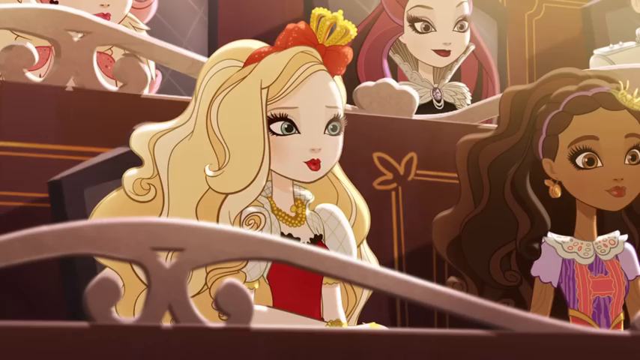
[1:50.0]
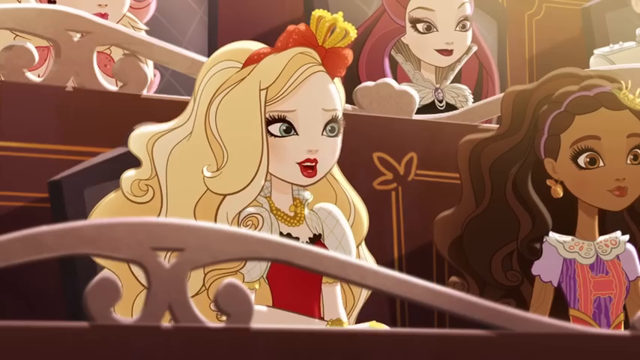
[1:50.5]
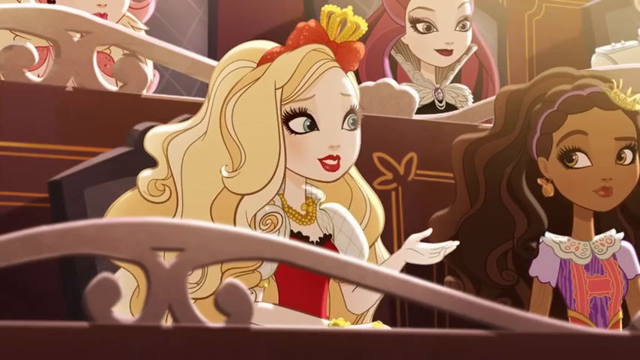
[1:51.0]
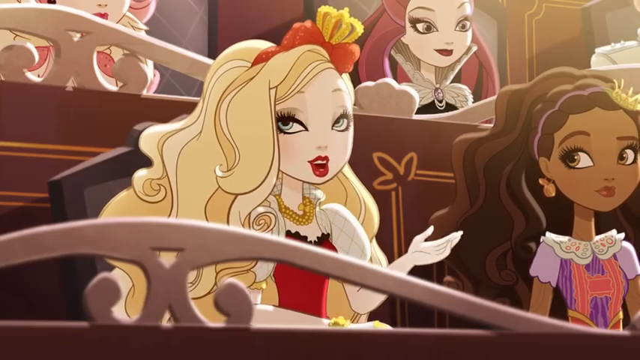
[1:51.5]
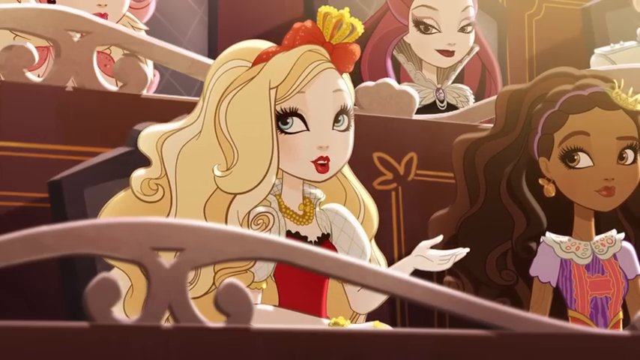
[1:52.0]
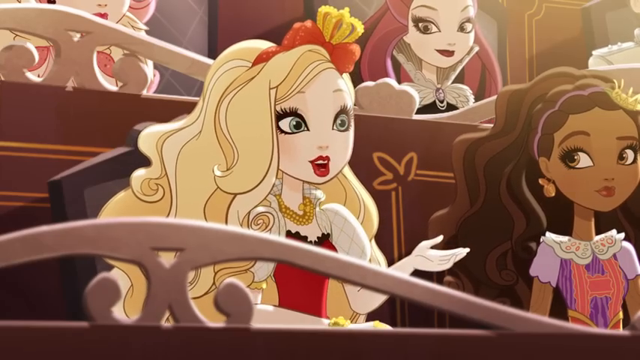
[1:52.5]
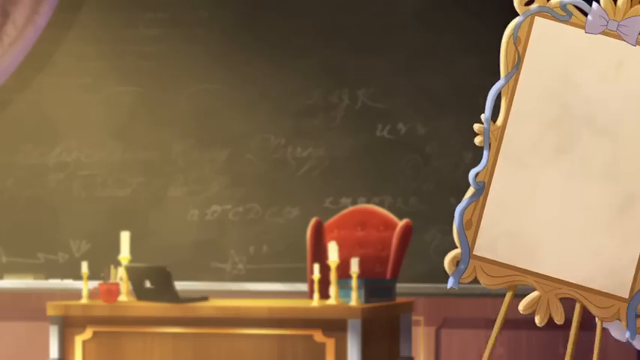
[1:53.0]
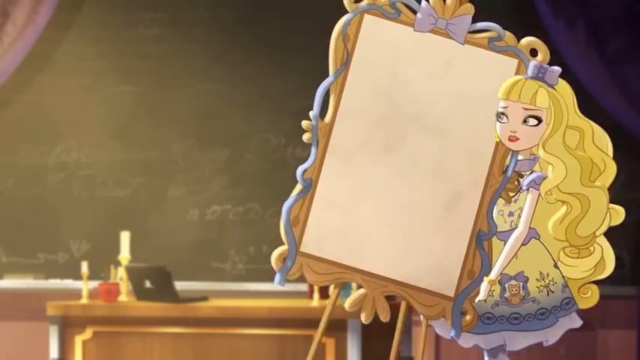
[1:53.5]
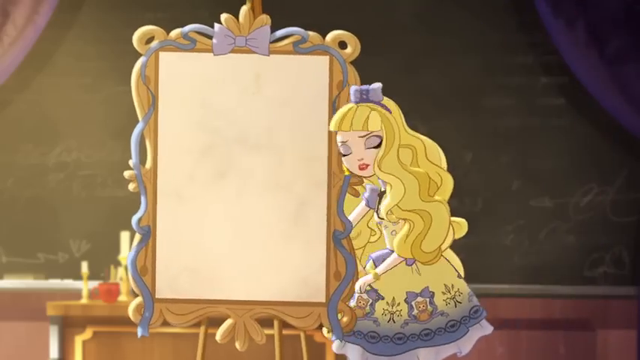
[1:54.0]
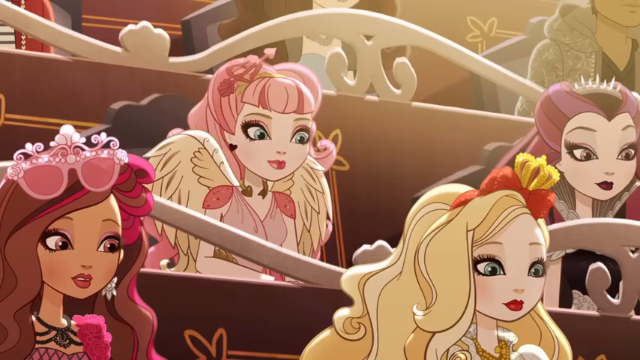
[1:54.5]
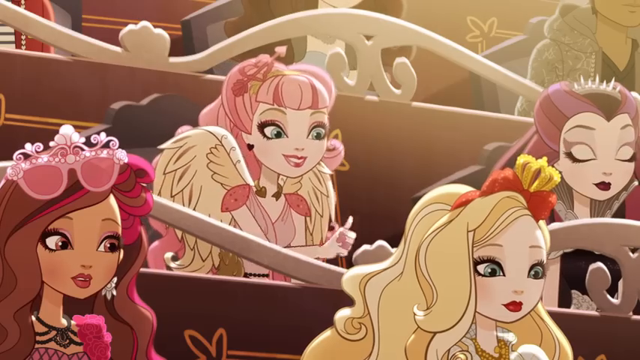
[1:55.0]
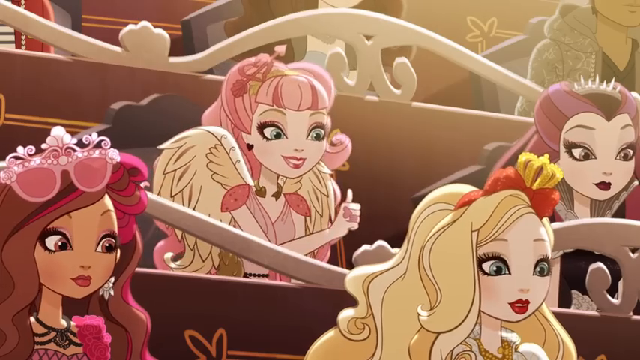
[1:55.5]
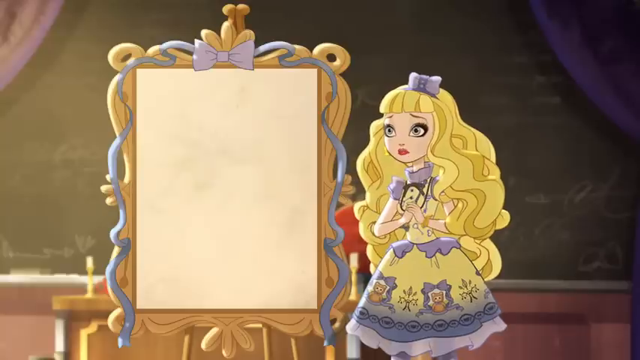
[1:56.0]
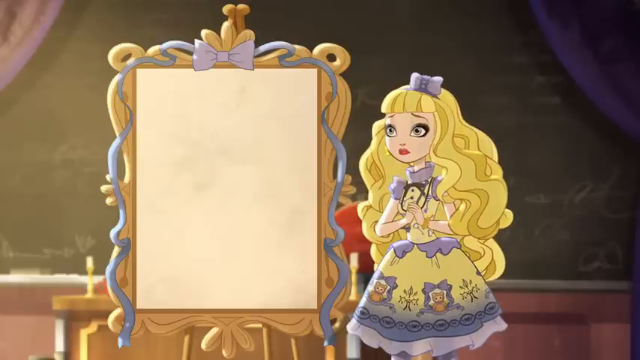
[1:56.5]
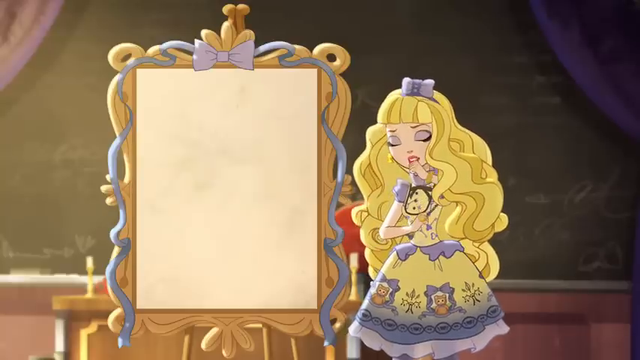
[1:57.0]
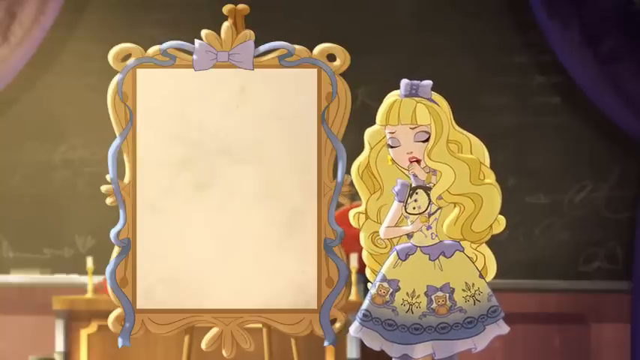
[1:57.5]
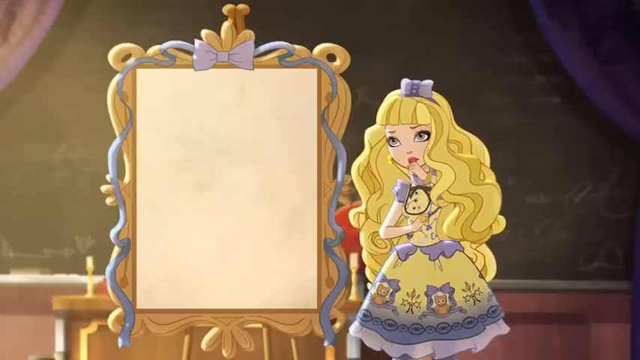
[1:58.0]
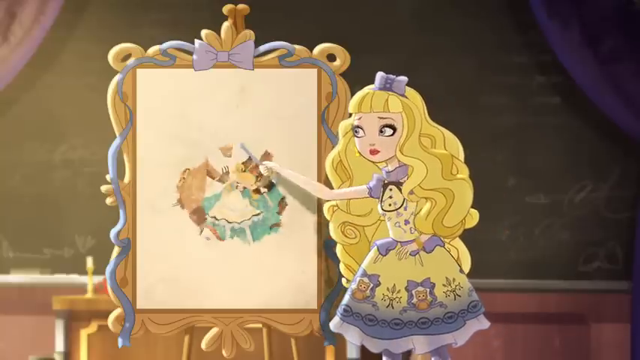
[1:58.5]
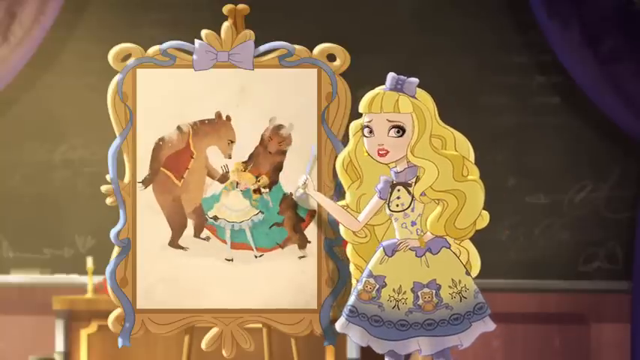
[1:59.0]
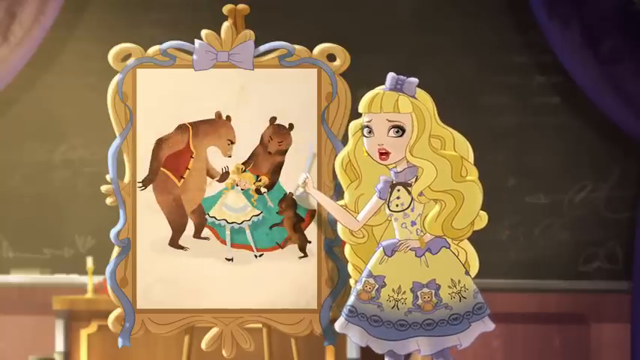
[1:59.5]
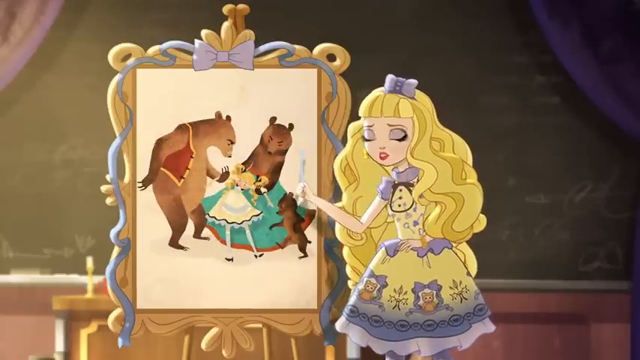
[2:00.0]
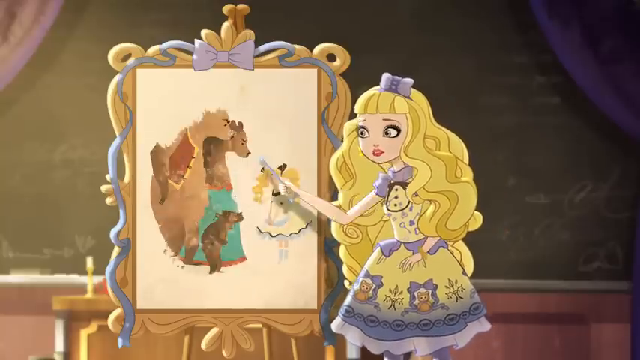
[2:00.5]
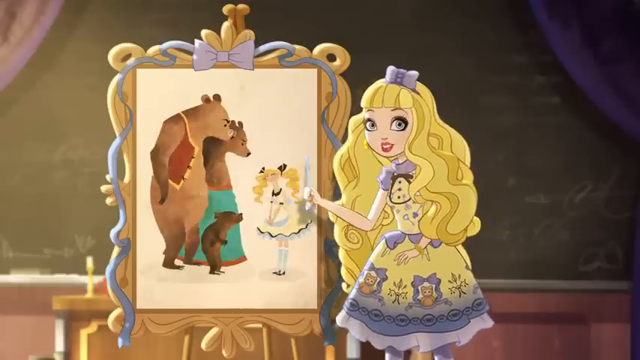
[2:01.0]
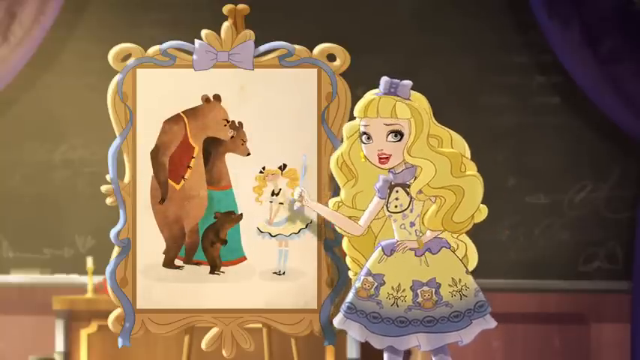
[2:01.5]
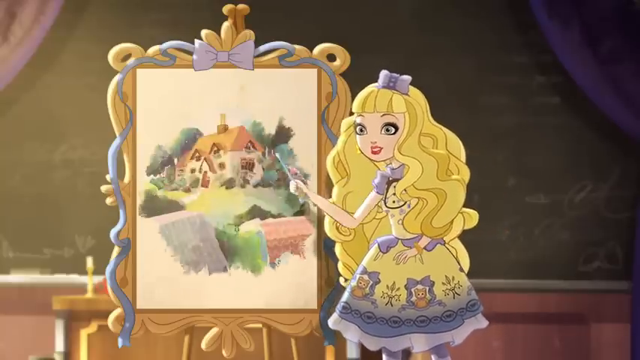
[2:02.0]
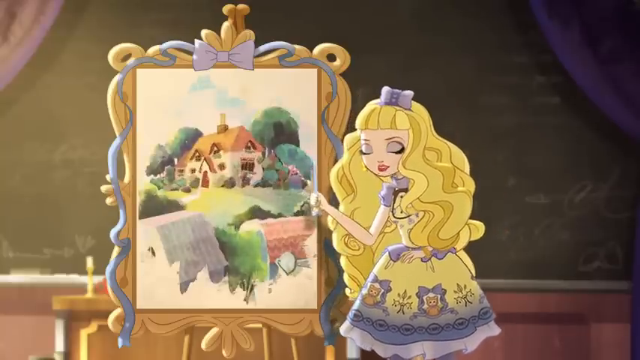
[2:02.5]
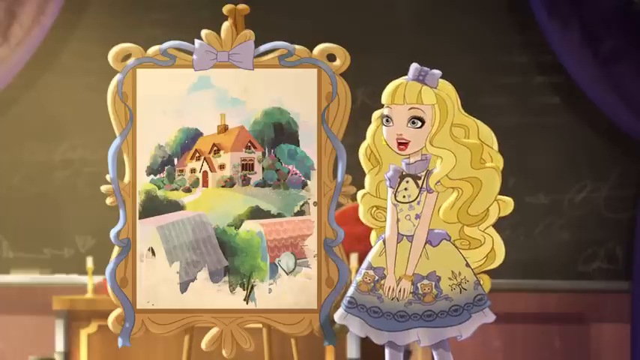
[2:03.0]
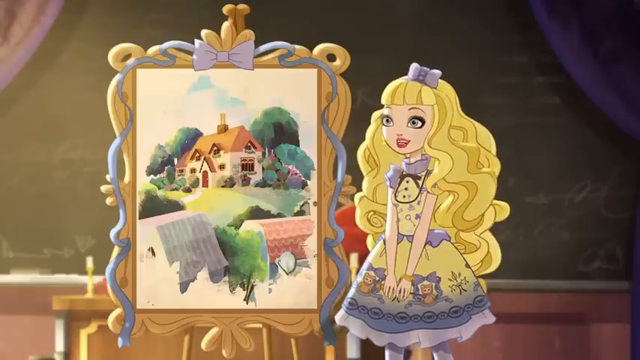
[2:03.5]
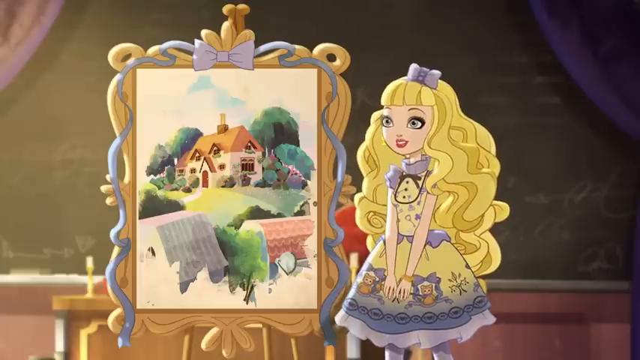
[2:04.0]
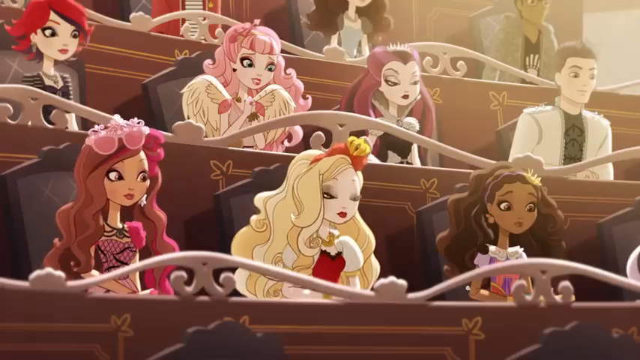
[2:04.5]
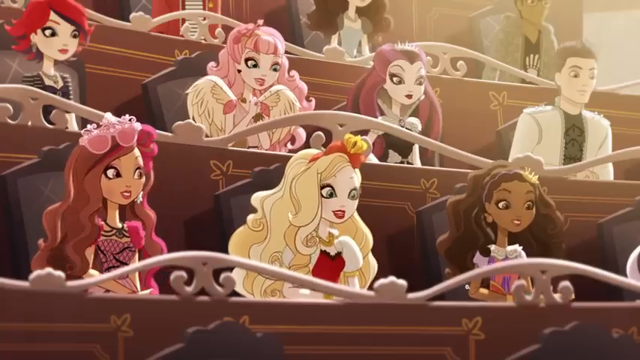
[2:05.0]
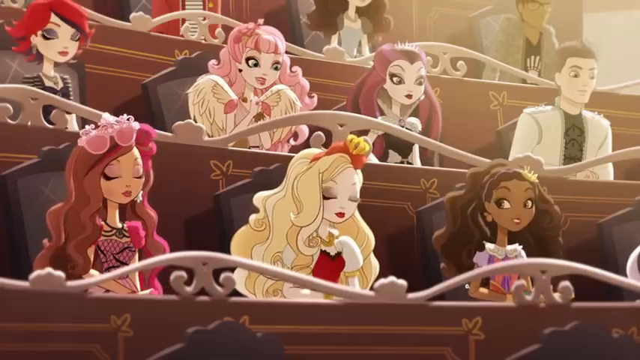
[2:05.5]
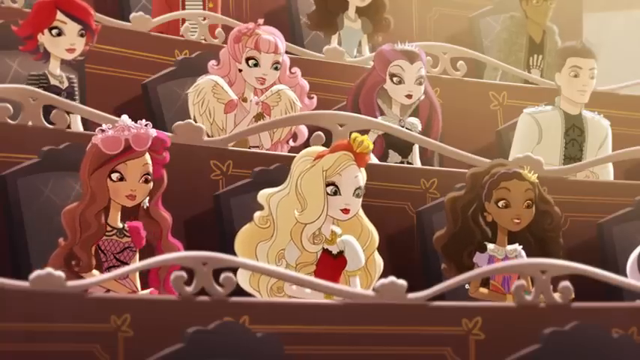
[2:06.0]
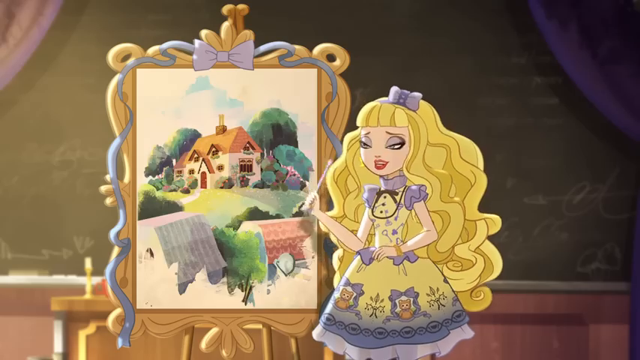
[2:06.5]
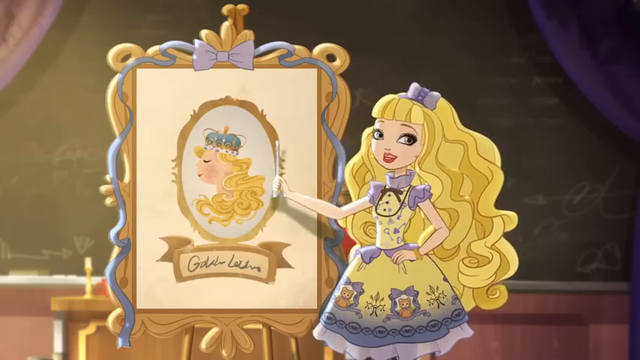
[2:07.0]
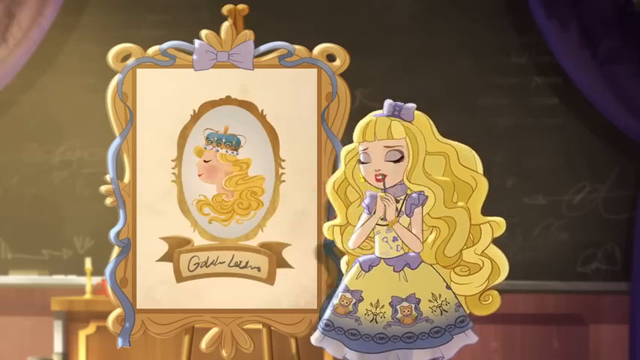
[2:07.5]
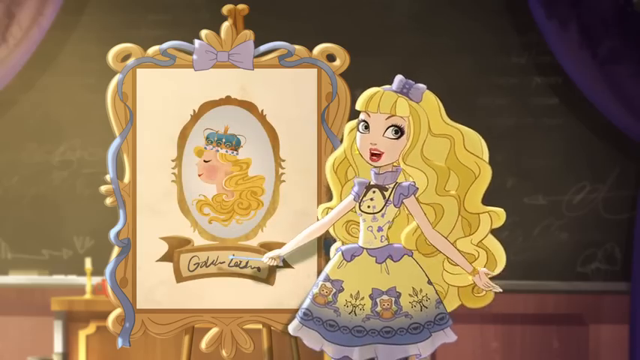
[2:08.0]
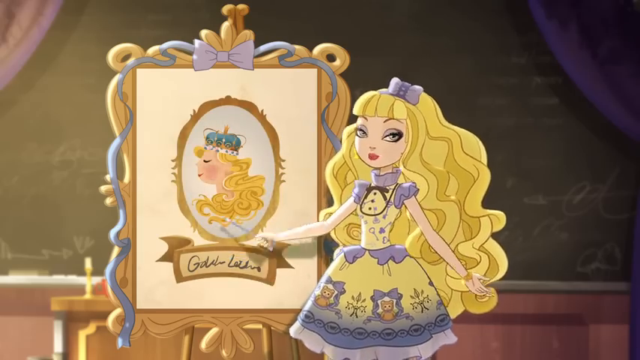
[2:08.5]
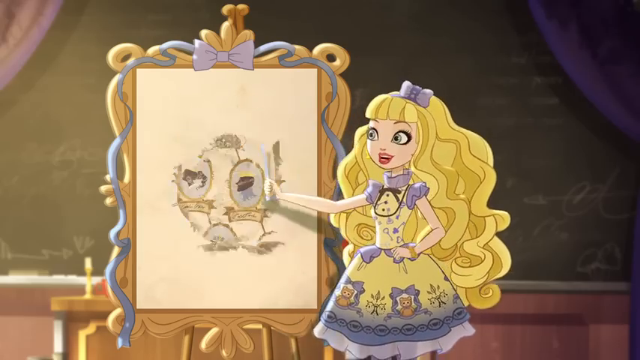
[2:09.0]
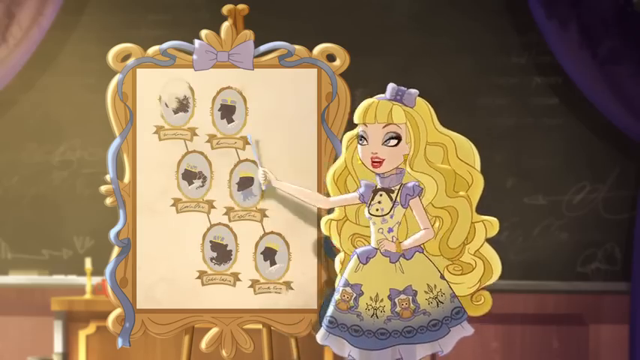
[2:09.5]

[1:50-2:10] A blonde girl has a red bowtie in her hair with a little crown within it, and wears some sort of red and white dress with a lot of gold necklaces and tiny black accents. Beside her is a black girl with brown hair, earrings, a purple dress with some sort of red straps, and a tiny crown and a pink-purple thing through her hair. Behind them is a girl in a black and white dress with red and black hair, who almost looks like she might be a villain. The scene then goes to the original girl, who is extremely sad and apparently explaining her family, as Goldilocks of the three bears.